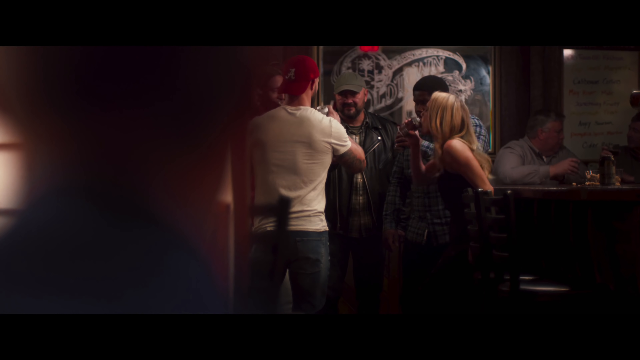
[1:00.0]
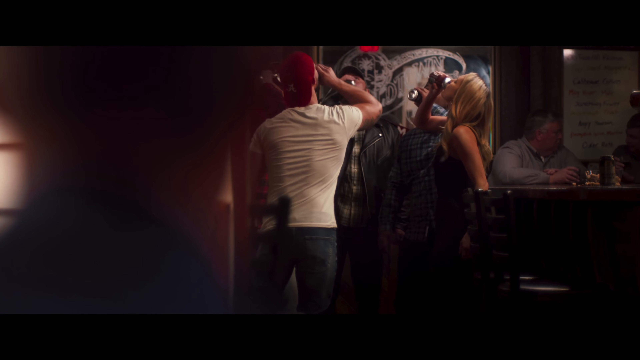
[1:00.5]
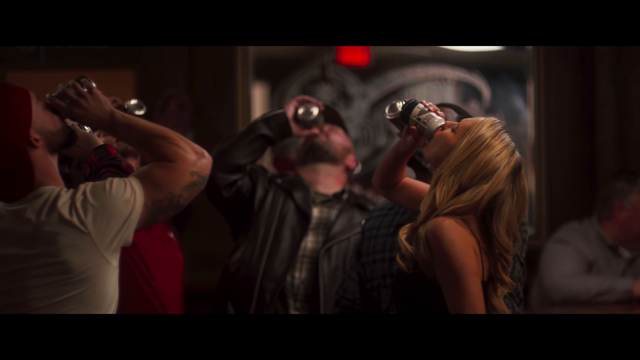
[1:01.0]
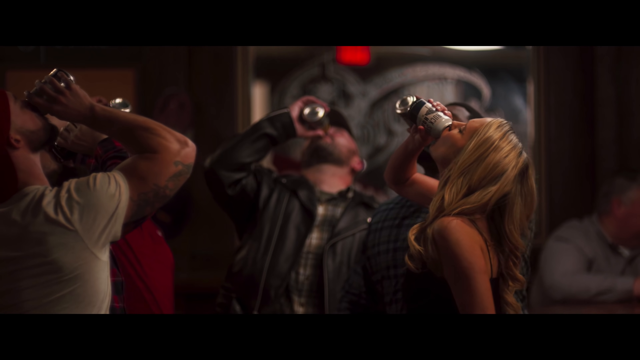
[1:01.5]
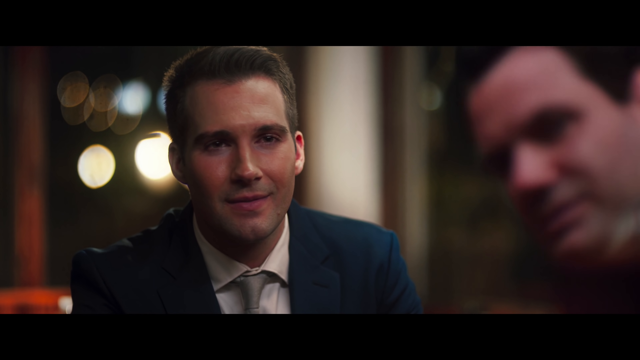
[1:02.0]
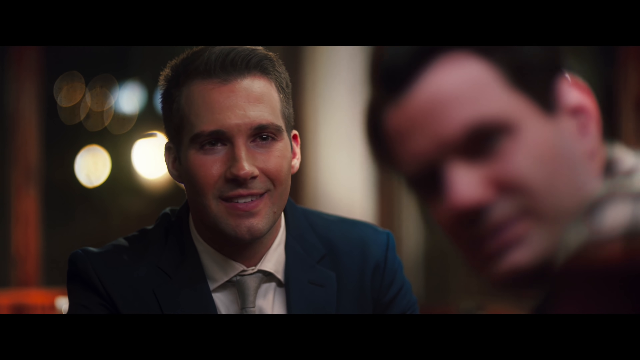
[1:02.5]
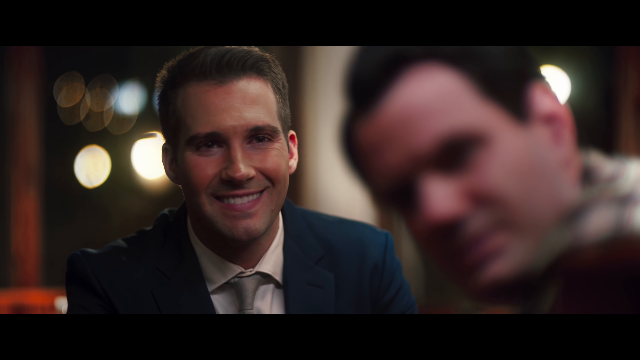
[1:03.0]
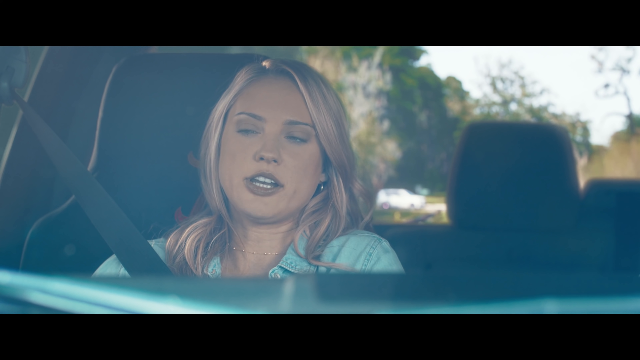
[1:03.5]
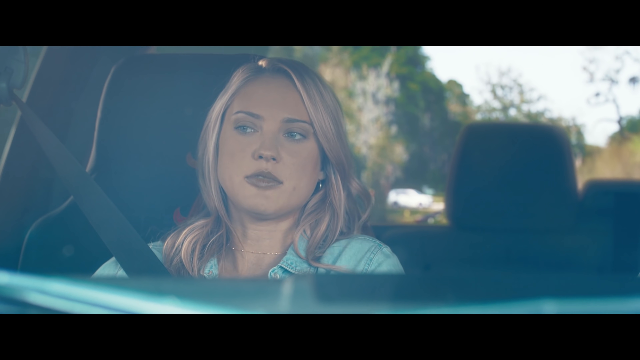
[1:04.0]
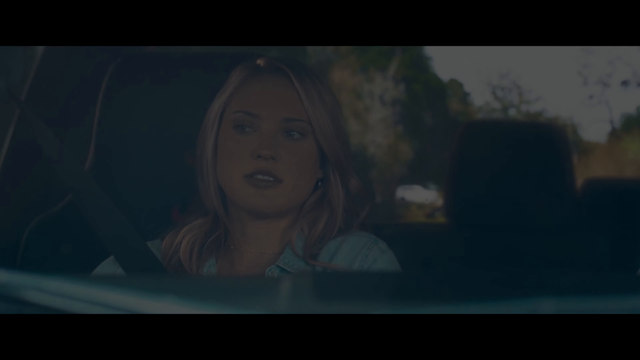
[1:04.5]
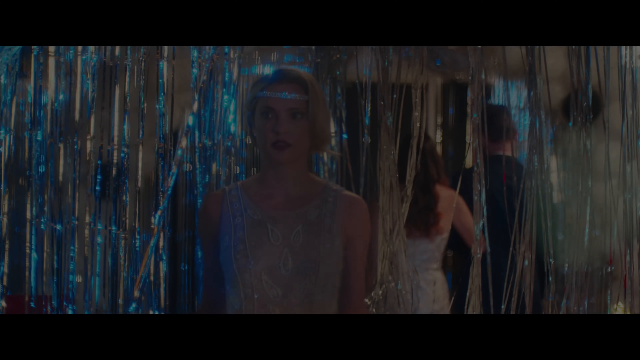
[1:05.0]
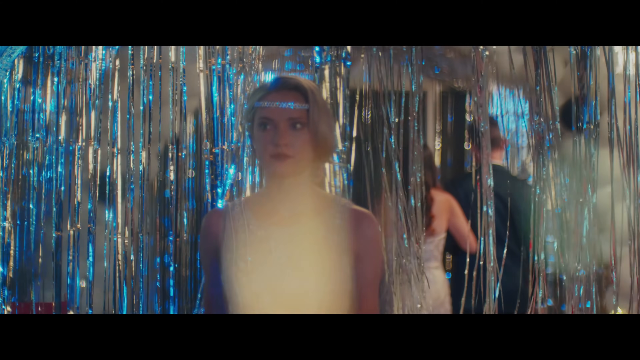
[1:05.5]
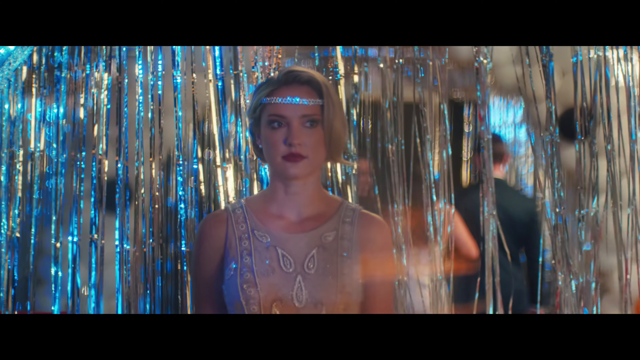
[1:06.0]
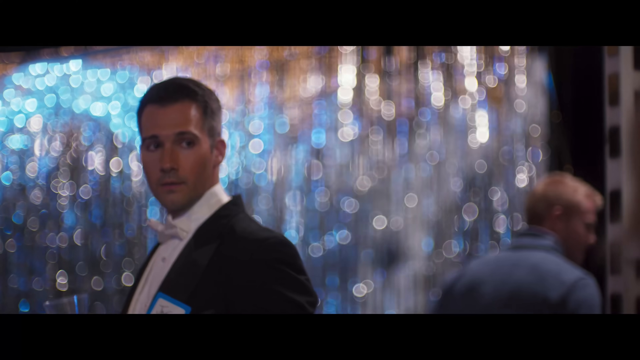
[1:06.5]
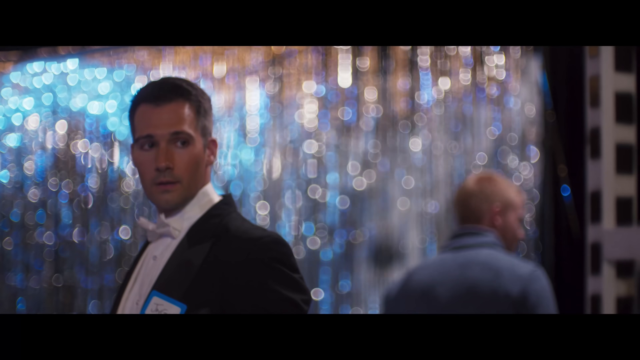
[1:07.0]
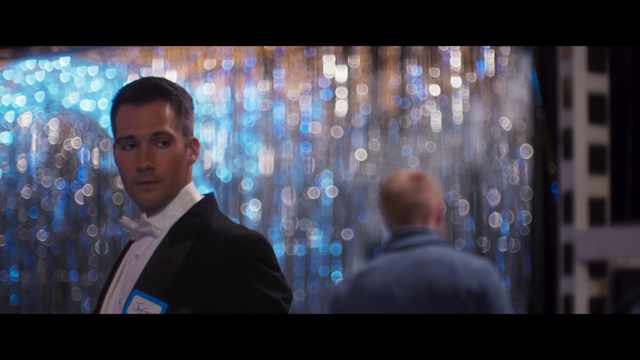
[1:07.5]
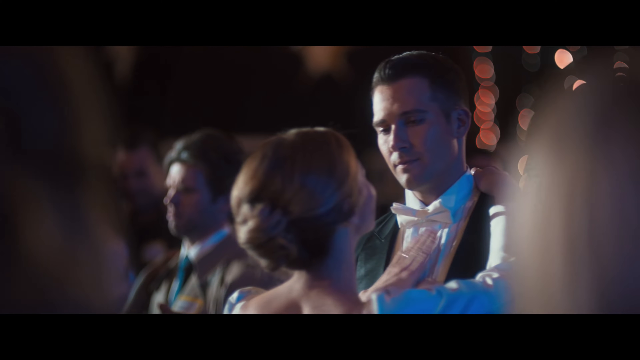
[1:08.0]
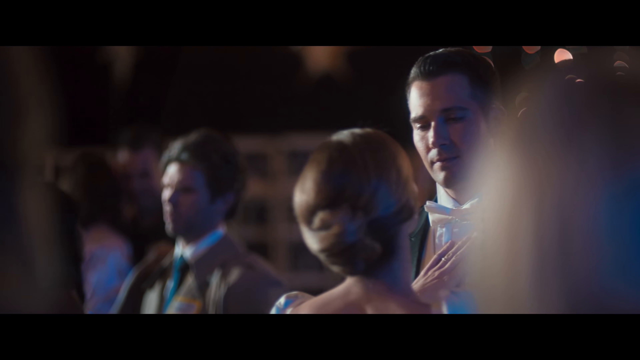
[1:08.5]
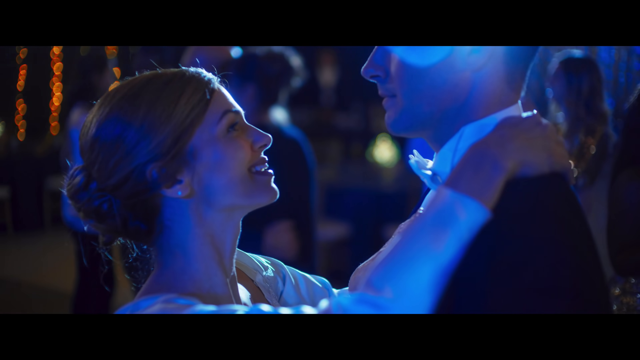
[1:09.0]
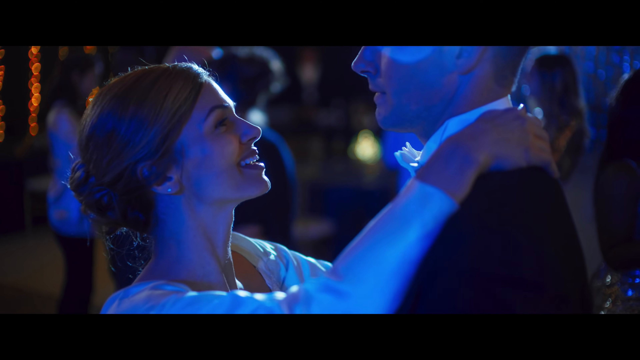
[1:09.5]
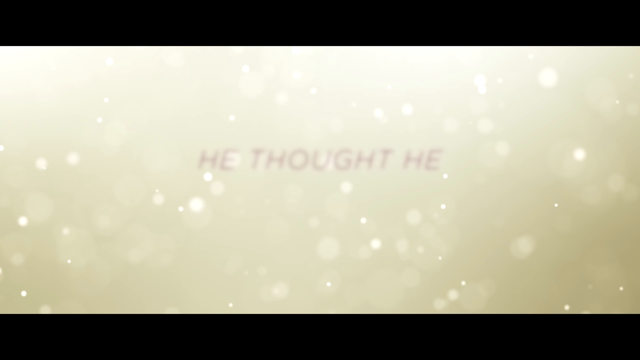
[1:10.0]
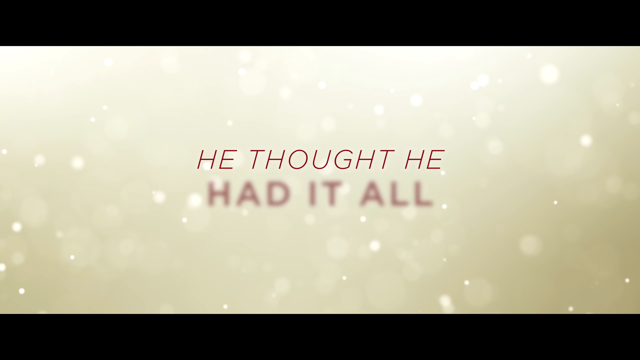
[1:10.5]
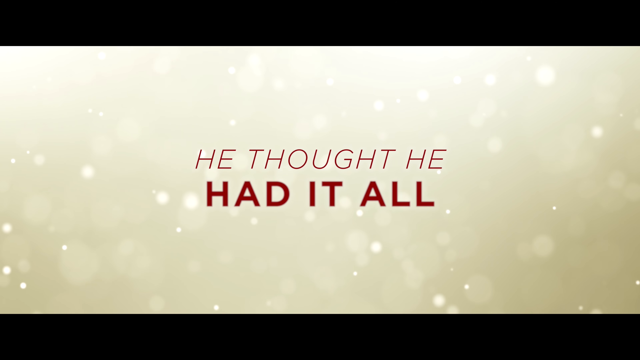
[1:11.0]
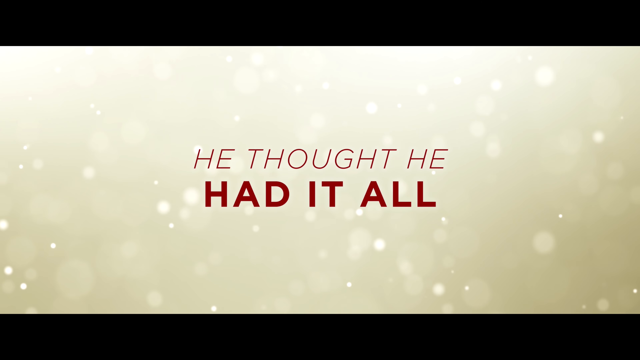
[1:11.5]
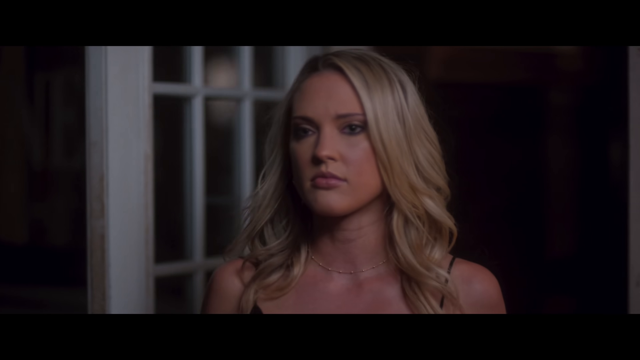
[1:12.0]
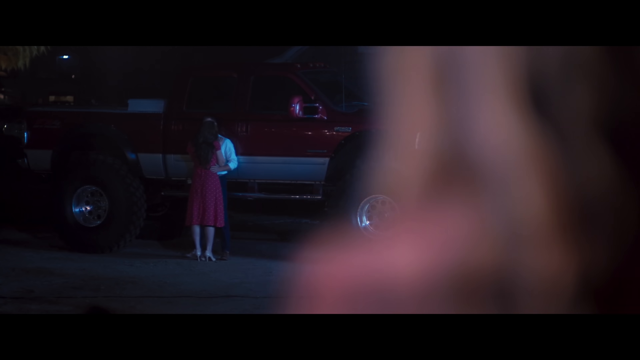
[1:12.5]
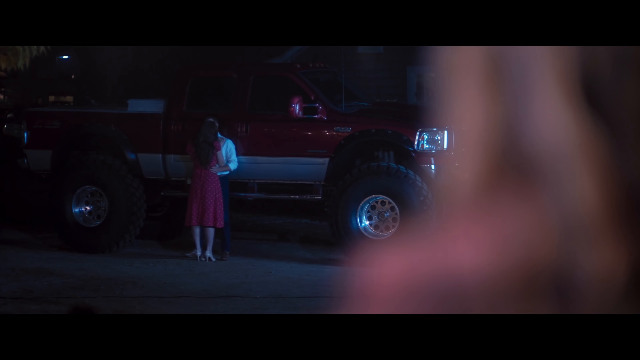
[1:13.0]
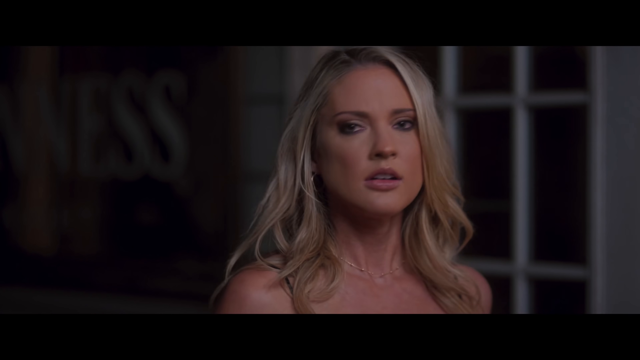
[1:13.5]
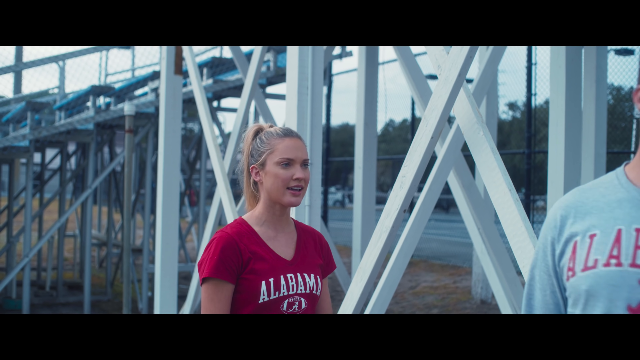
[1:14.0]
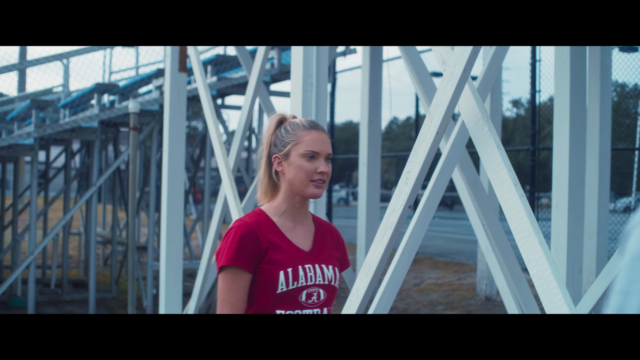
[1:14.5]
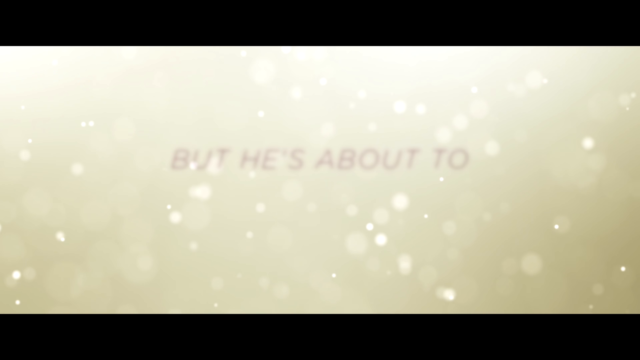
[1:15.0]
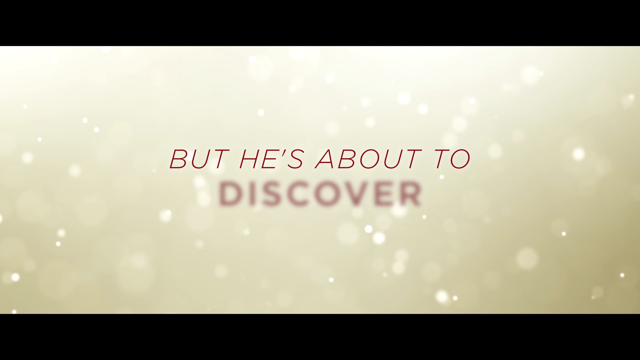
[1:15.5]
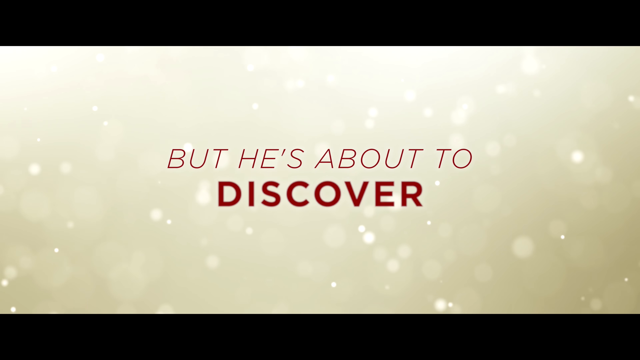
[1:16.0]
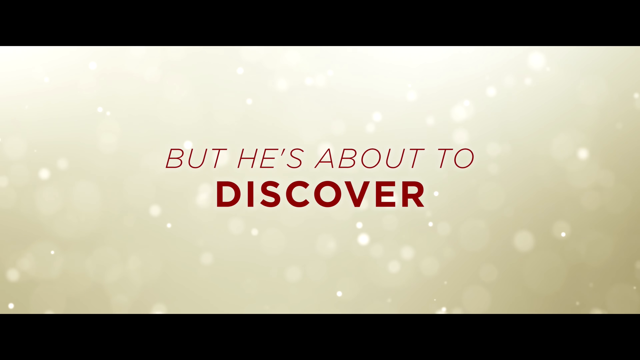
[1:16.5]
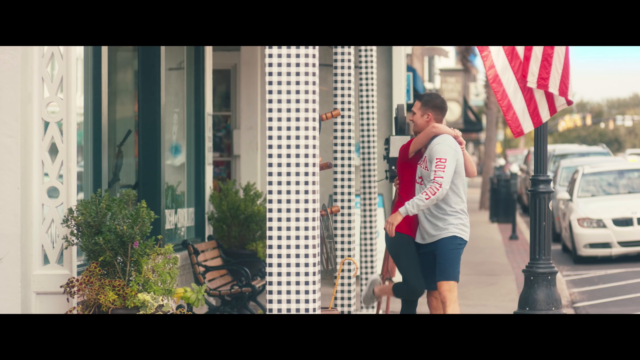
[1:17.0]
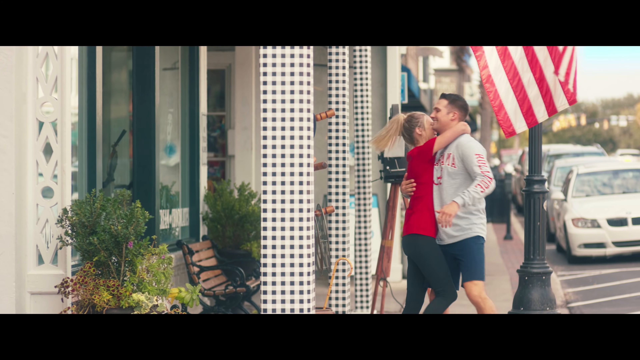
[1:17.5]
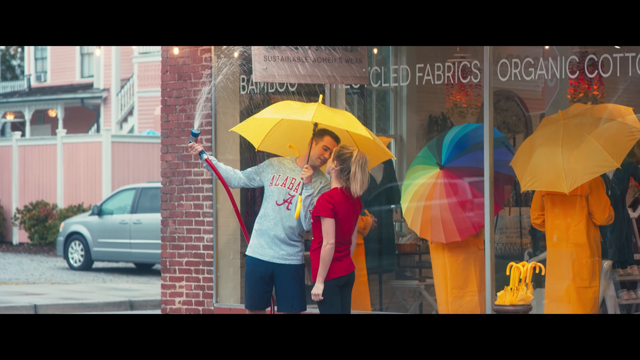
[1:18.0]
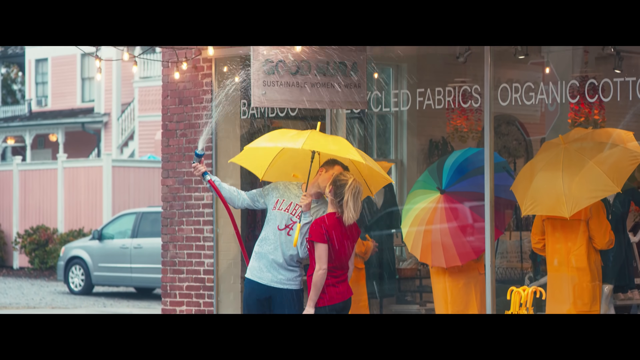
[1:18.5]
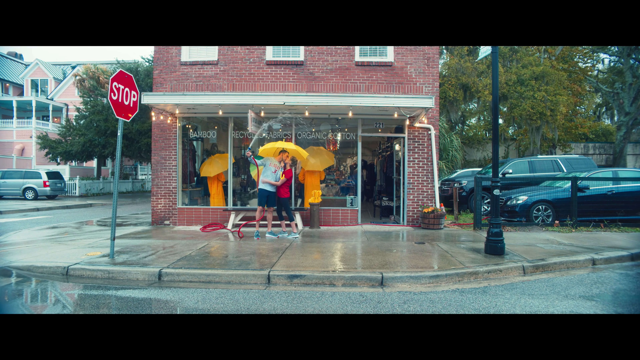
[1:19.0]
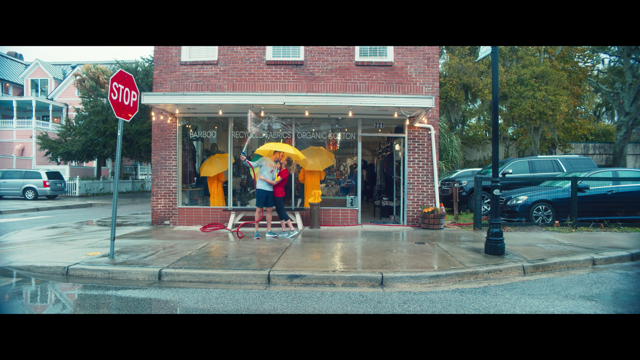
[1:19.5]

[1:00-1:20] People are shown drinking alcohol while being watched. A woman in a car is doing something and is stunned by a man. A couple kisses under an umbrella but is seen by someone. One man seems not to know what the woman is talking about, and the woman appears to be cheating while another man finds out.